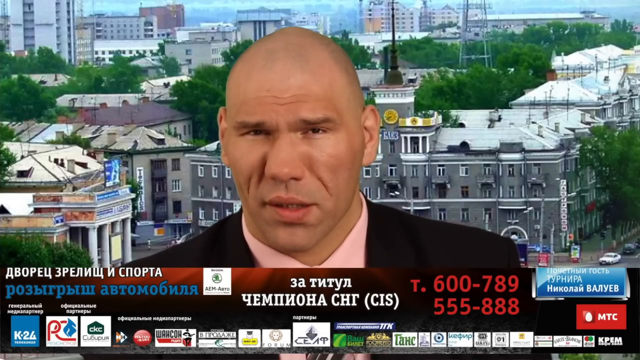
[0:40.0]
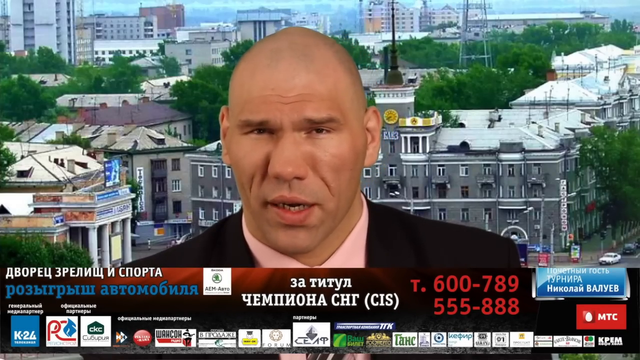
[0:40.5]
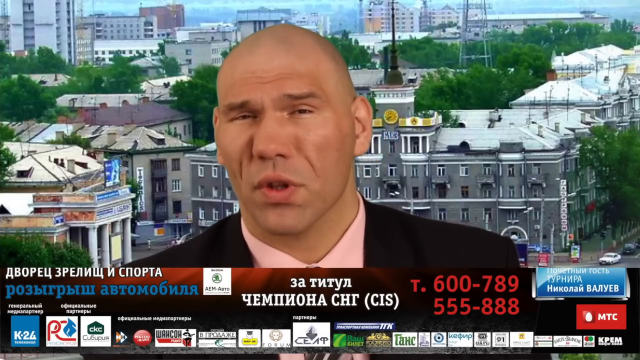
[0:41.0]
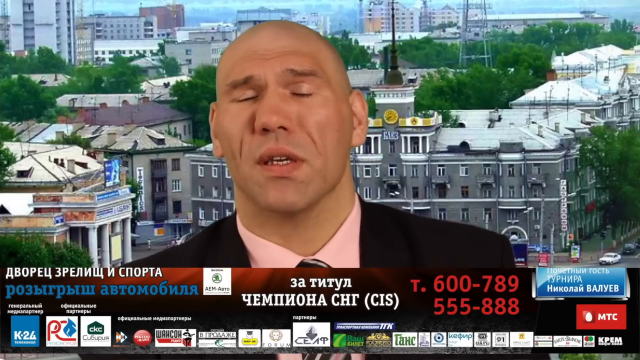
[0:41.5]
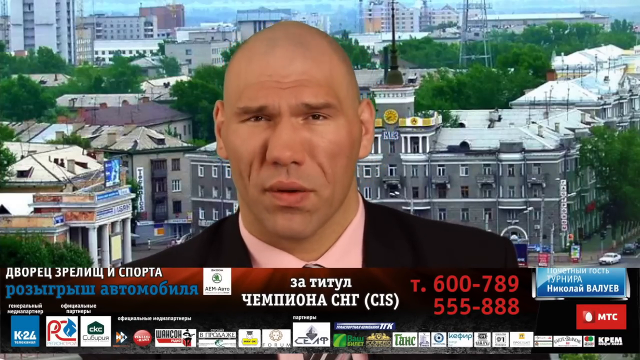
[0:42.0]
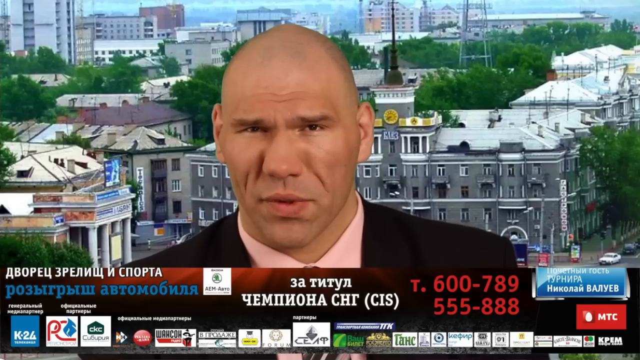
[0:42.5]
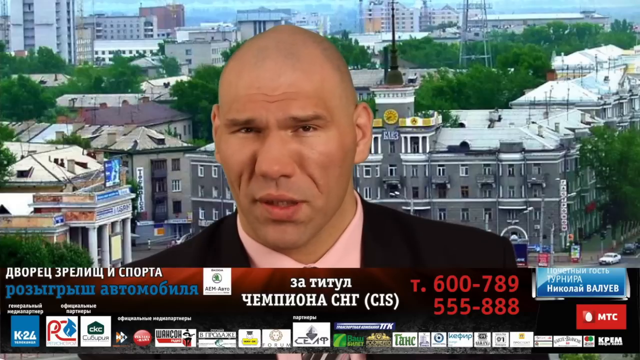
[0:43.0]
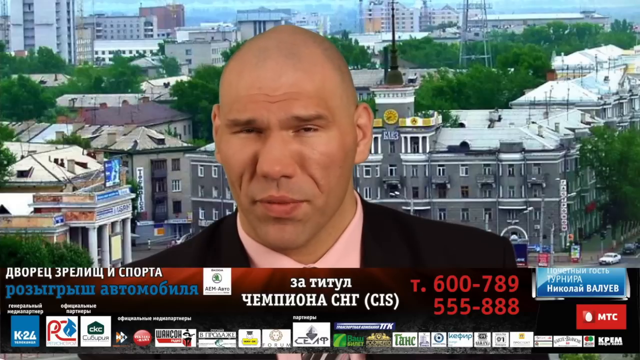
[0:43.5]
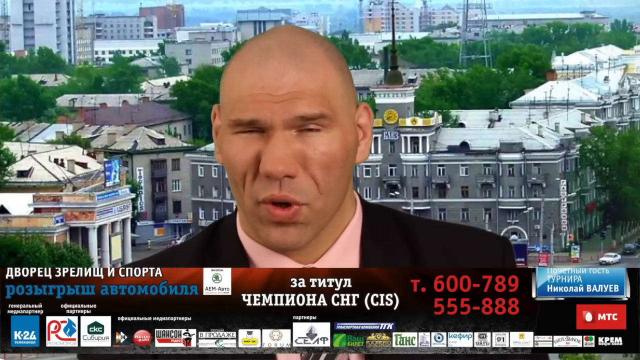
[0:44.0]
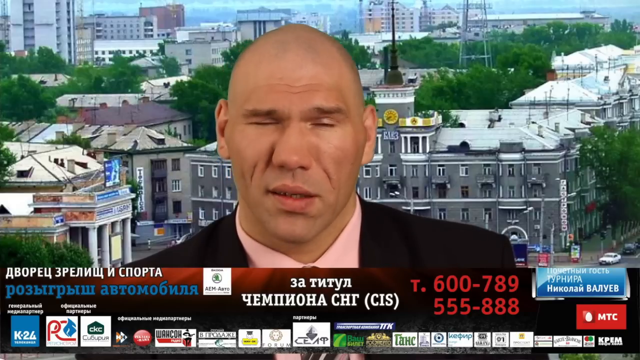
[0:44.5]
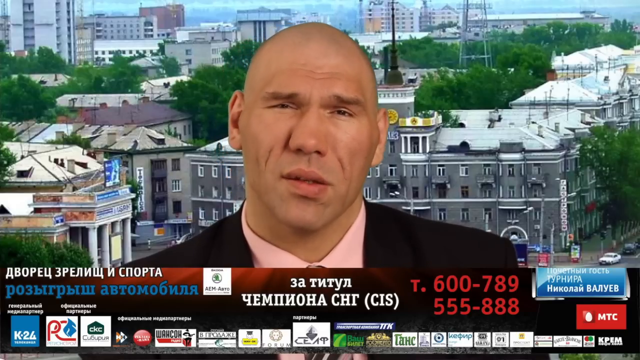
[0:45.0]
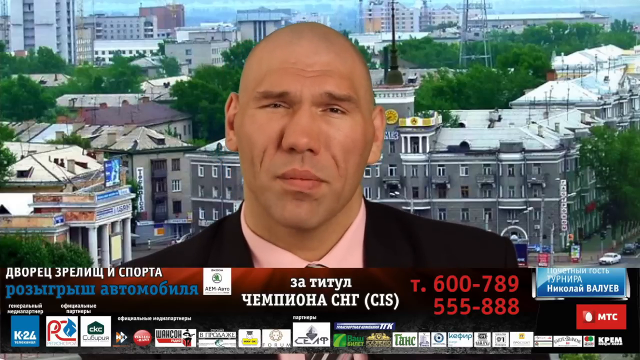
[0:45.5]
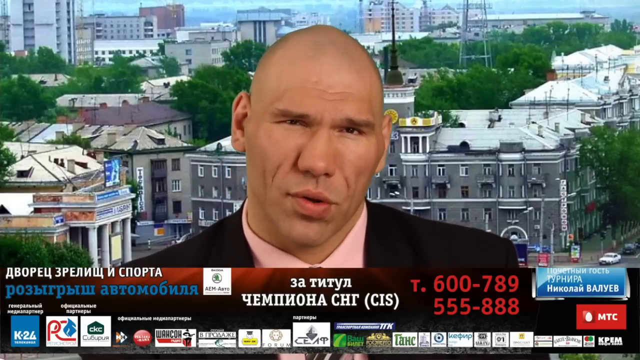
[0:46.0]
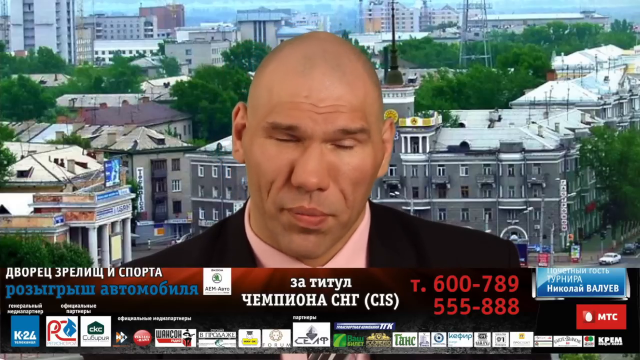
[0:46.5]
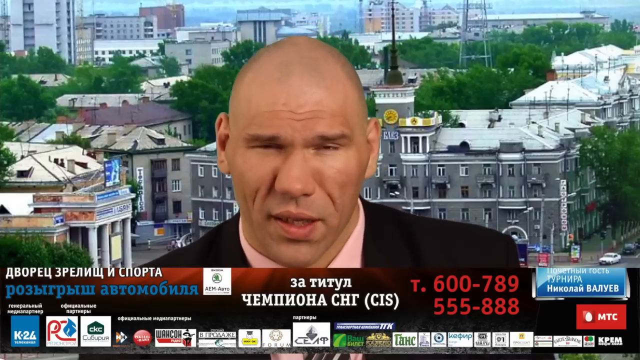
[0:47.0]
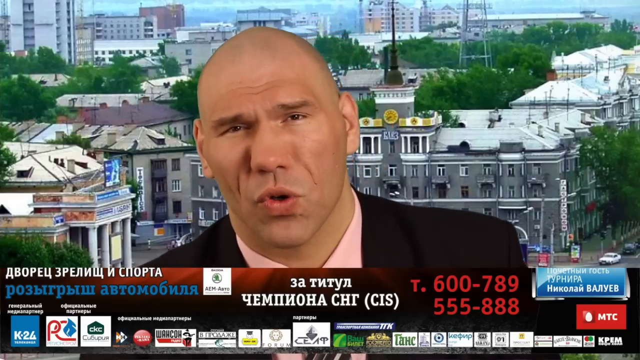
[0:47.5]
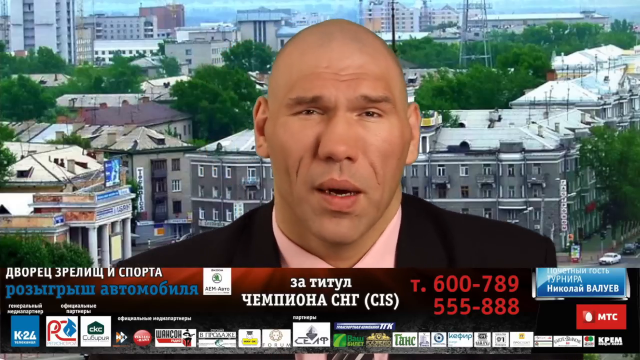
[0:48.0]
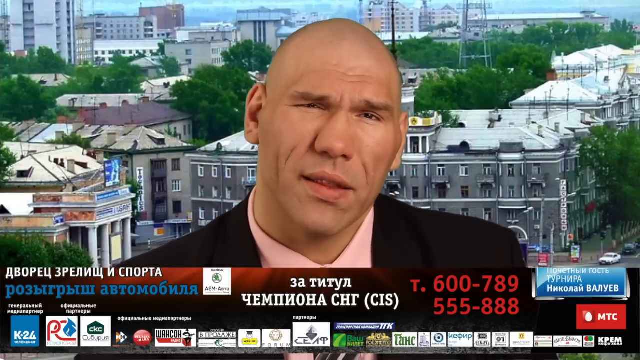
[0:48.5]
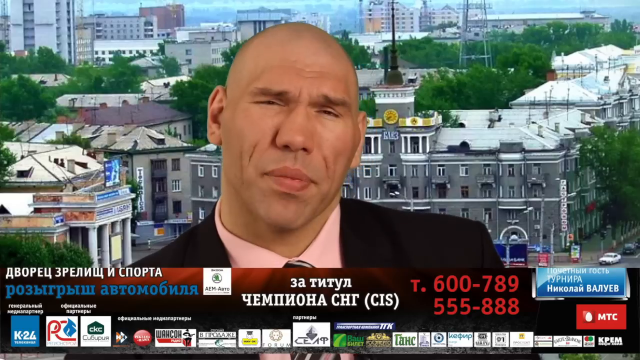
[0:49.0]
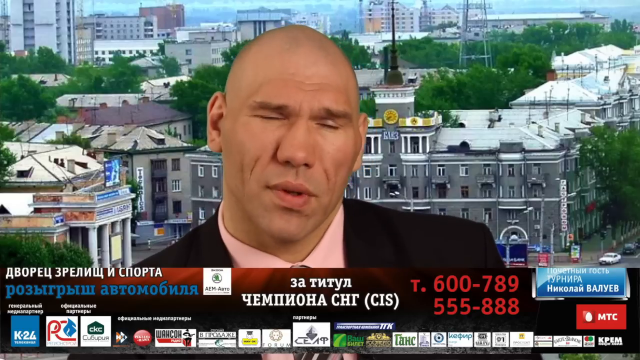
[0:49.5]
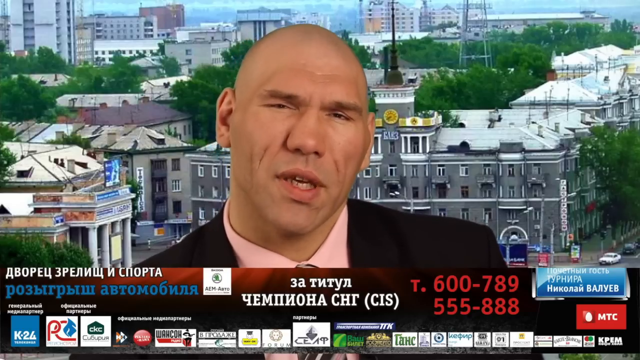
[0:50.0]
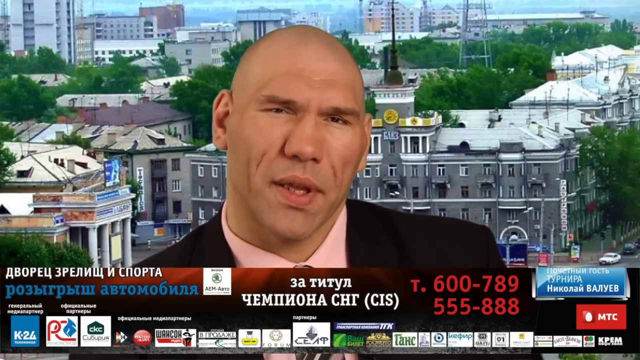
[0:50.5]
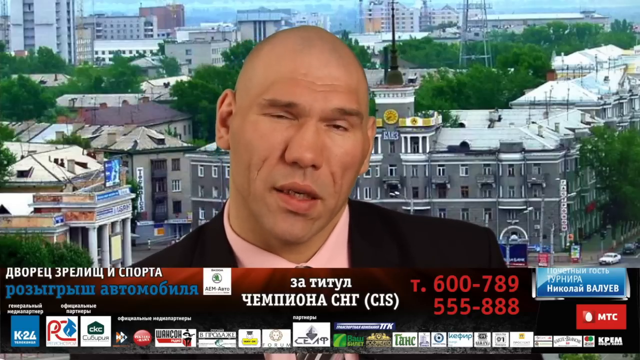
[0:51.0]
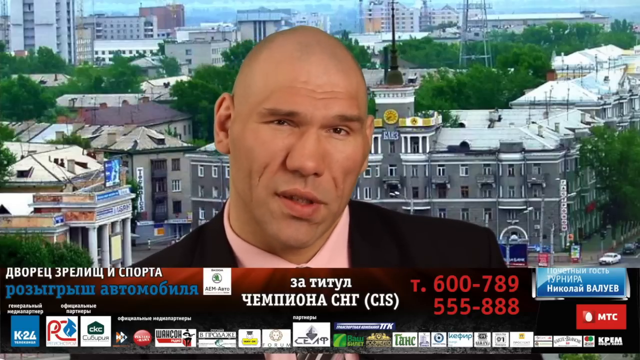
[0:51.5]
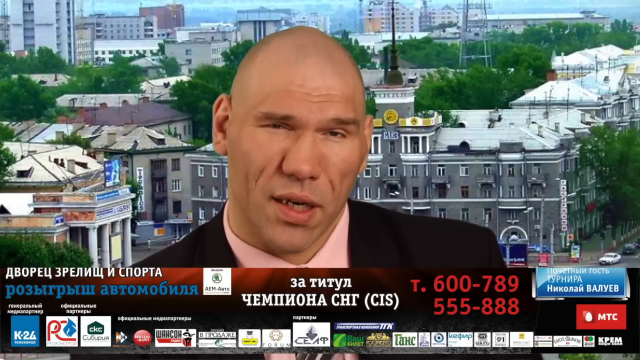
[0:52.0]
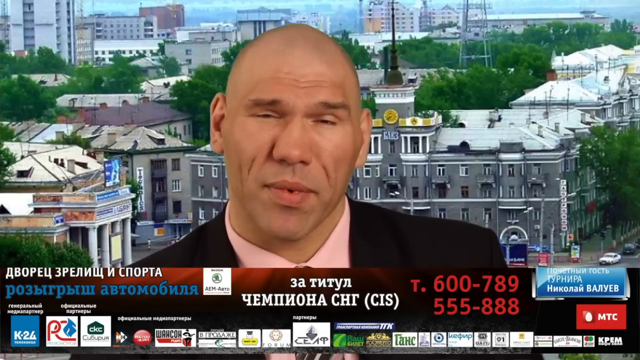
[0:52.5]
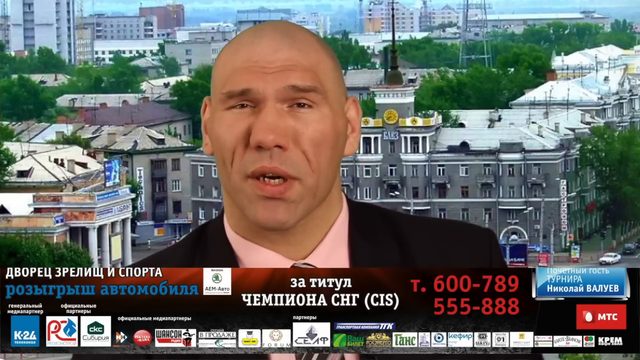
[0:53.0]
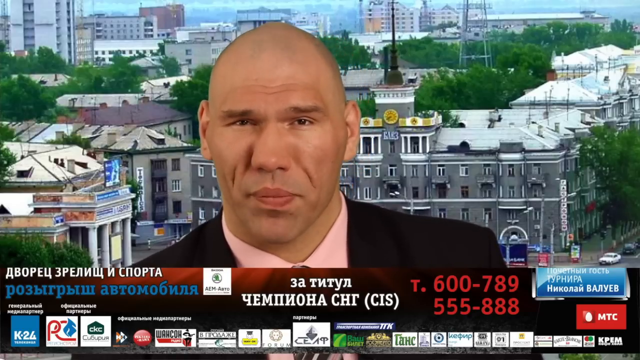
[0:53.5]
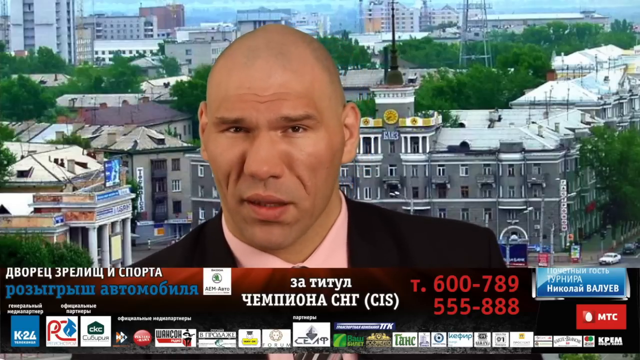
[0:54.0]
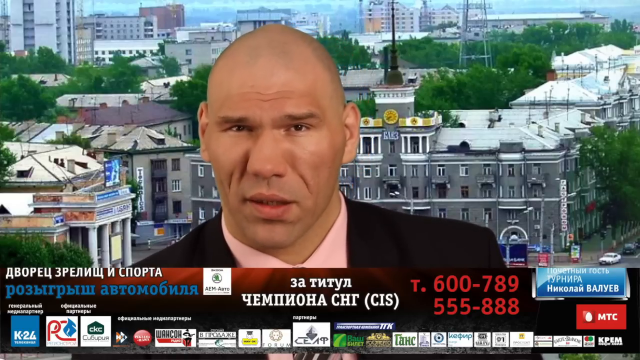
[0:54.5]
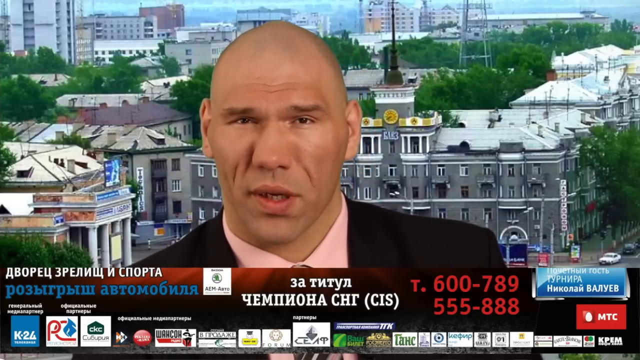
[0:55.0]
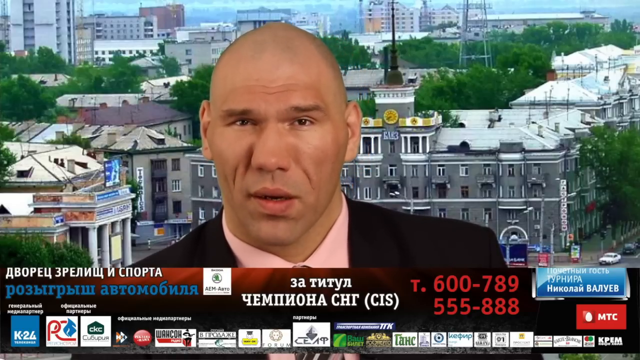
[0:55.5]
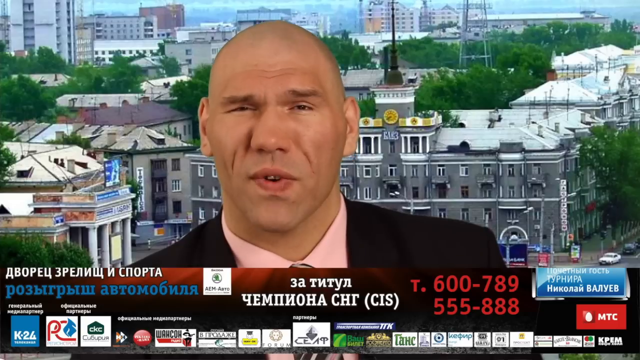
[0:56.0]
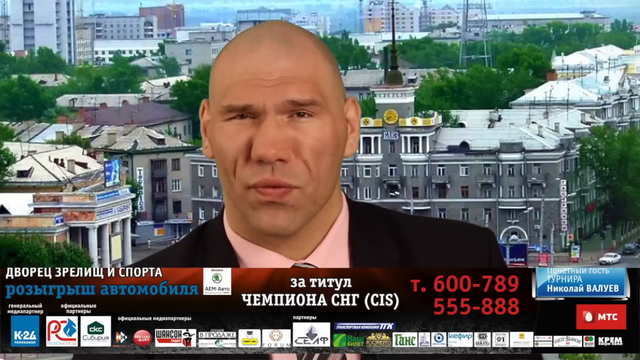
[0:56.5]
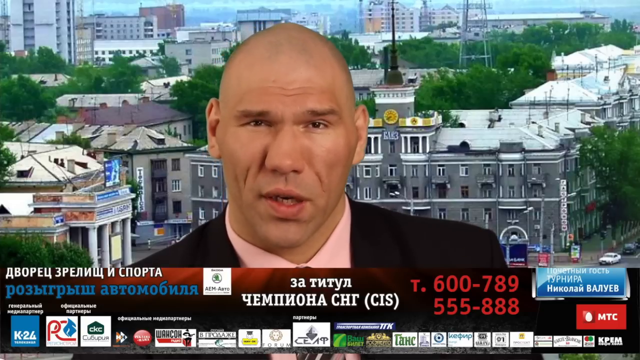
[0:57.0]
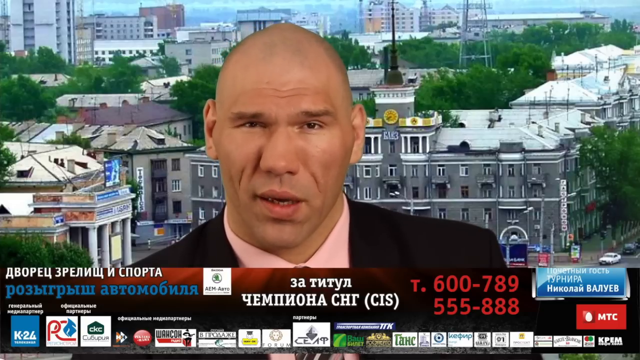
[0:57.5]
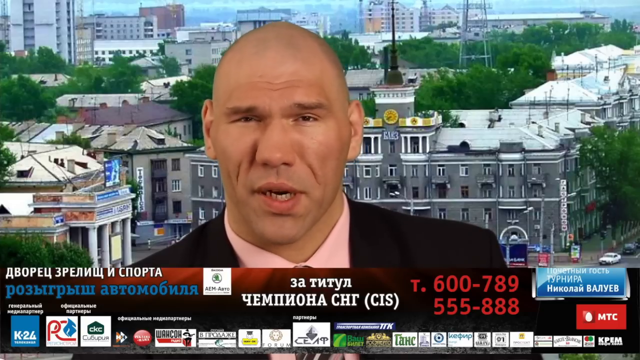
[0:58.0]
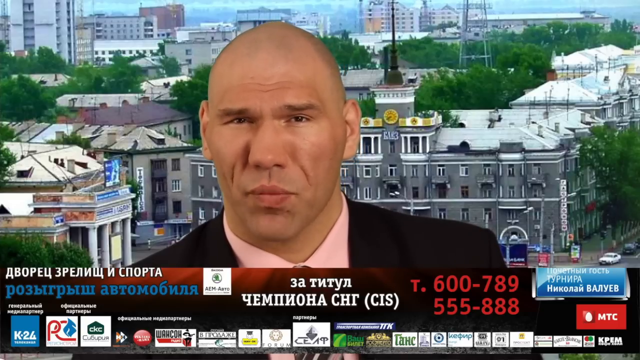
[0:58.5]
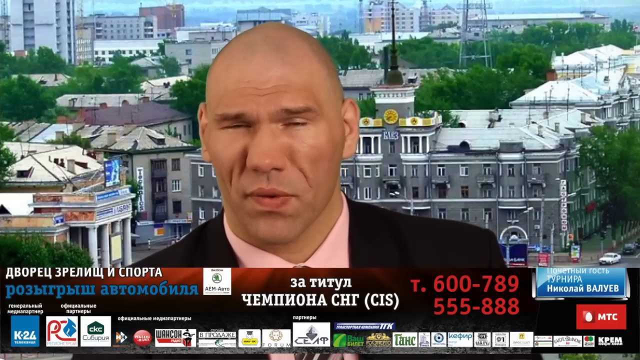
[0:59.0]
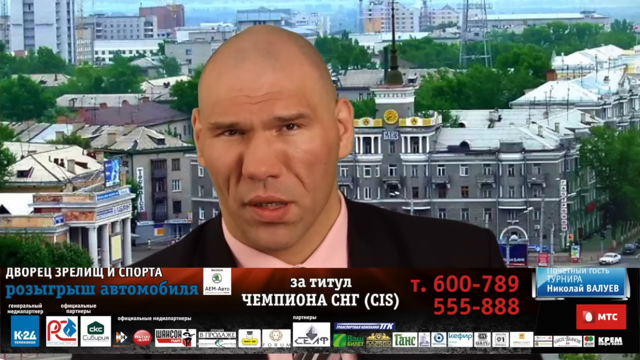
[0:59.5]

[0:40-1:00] A bald, white-skinned man in a black suit with a pink inner shirt is in front of the camera. Behind him is a sort of town or city landscape with a large gray building, and a number of large green trees between several large buildings; the lighting shows it is daytime. At the very bottom of the video are what look like sponsorships in small square boxes, some larger and some tinier. Red text on the bottom right, possibly a phone number, shows "T679" and "555-888". The man talks while looking directly at the camera, moving slightly to the left and slightly to the right as he speaks.